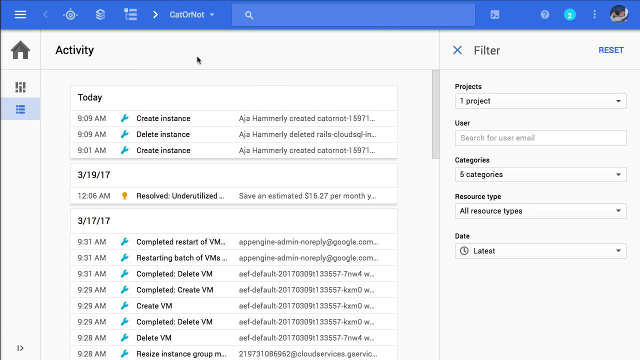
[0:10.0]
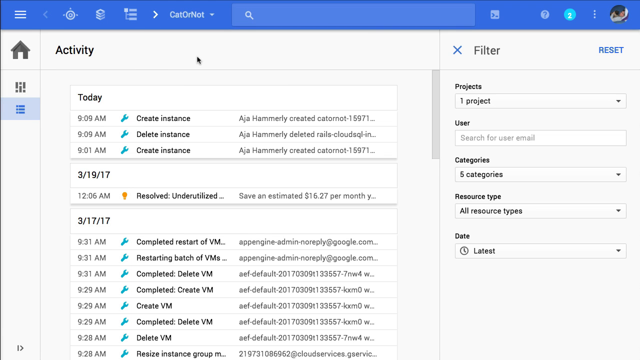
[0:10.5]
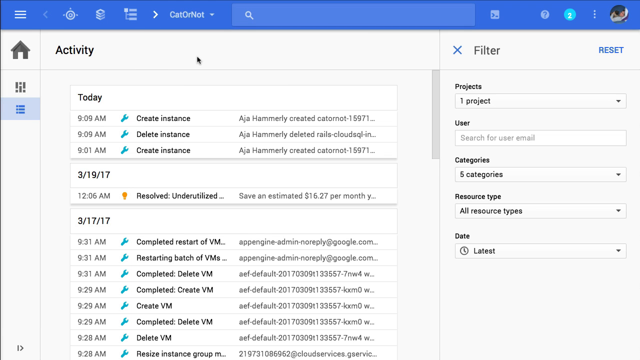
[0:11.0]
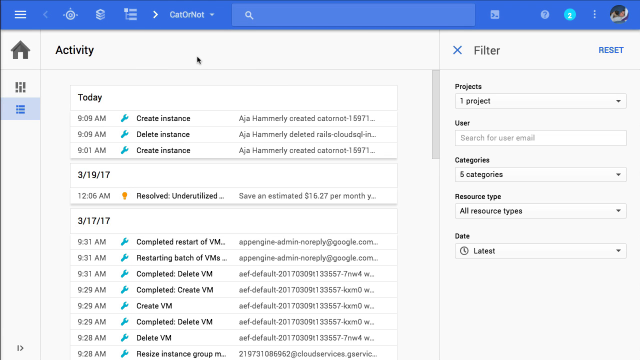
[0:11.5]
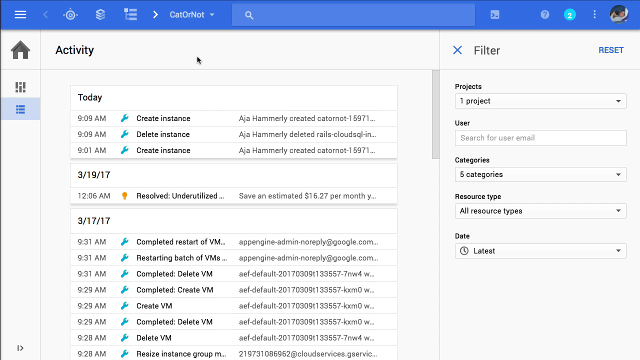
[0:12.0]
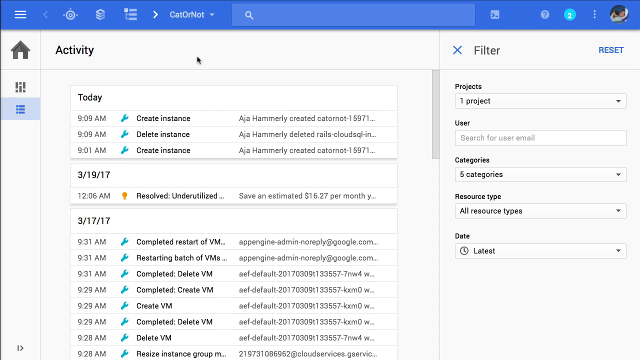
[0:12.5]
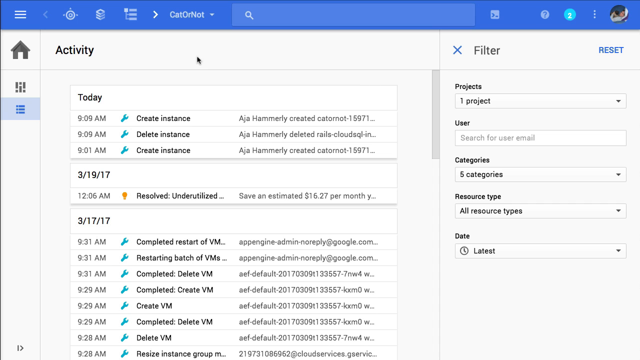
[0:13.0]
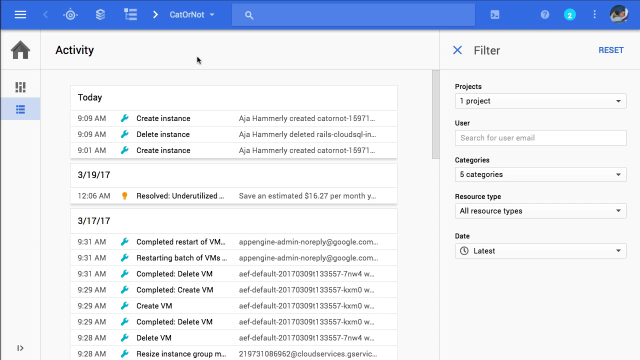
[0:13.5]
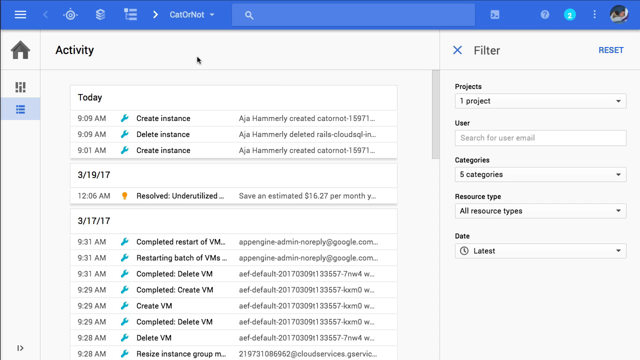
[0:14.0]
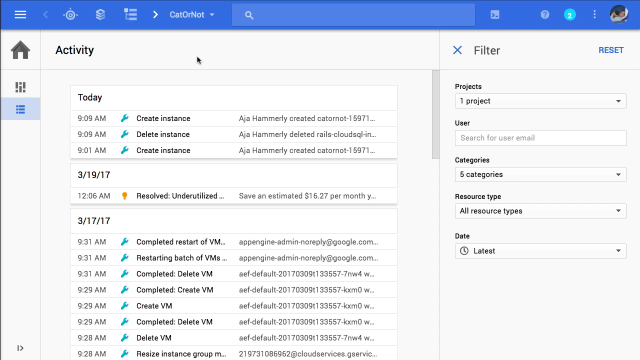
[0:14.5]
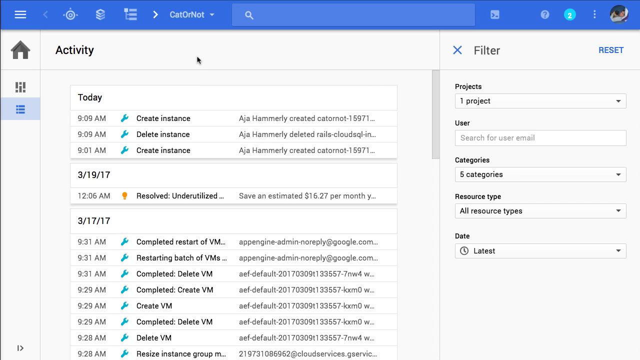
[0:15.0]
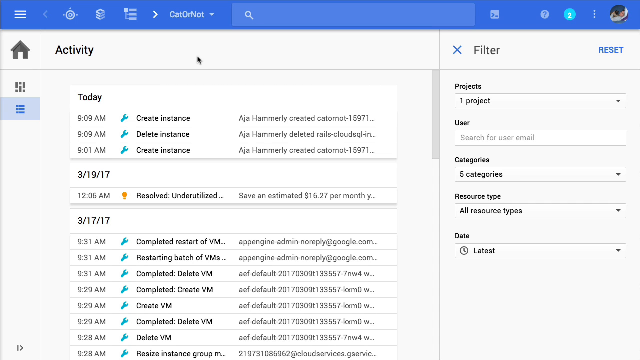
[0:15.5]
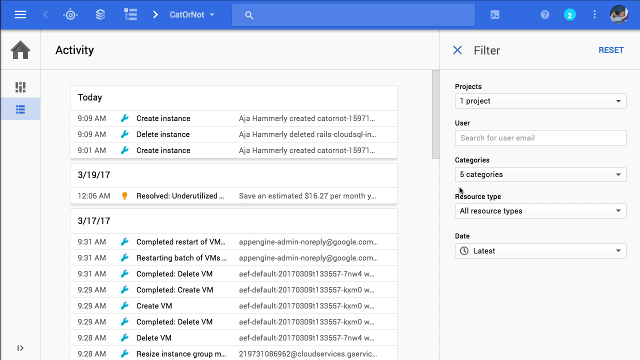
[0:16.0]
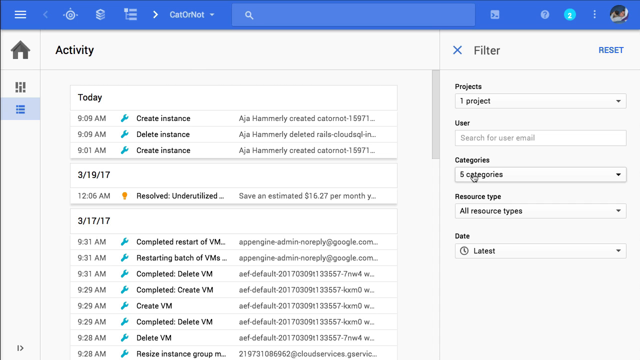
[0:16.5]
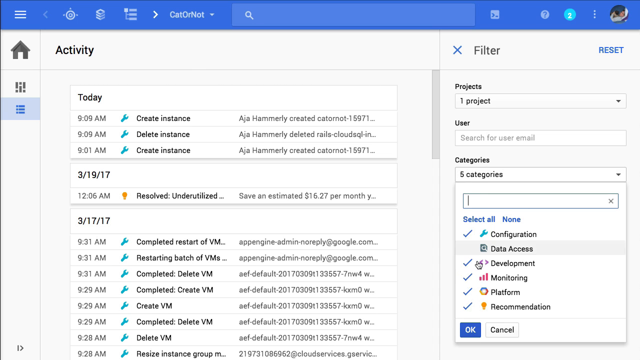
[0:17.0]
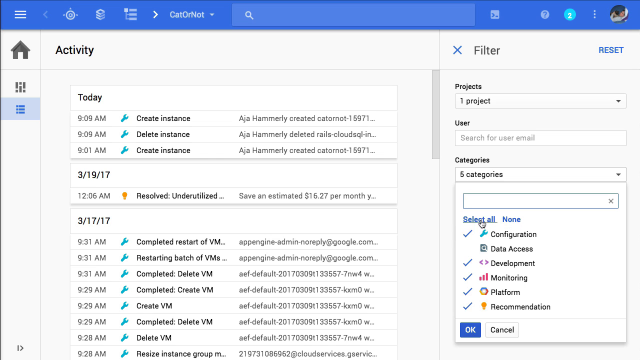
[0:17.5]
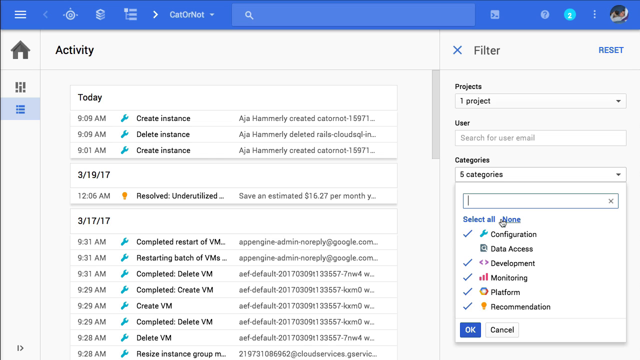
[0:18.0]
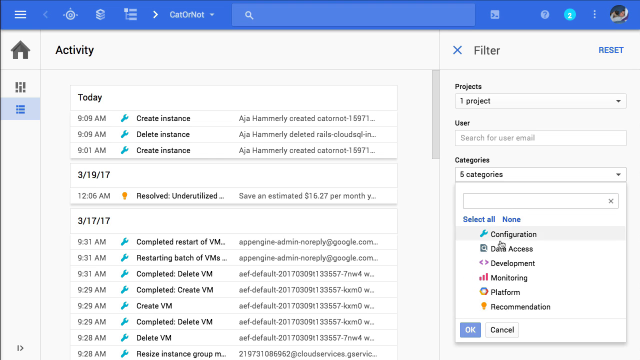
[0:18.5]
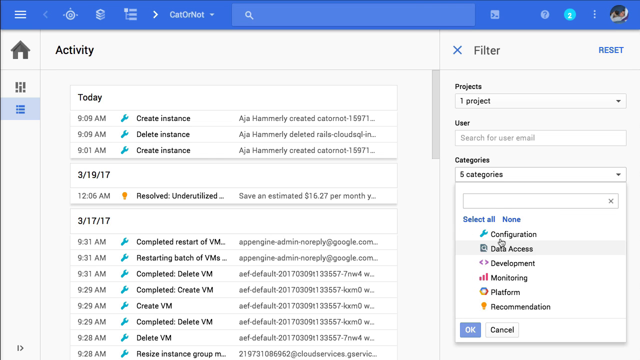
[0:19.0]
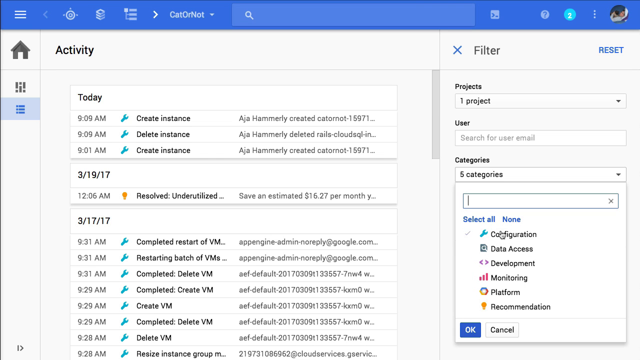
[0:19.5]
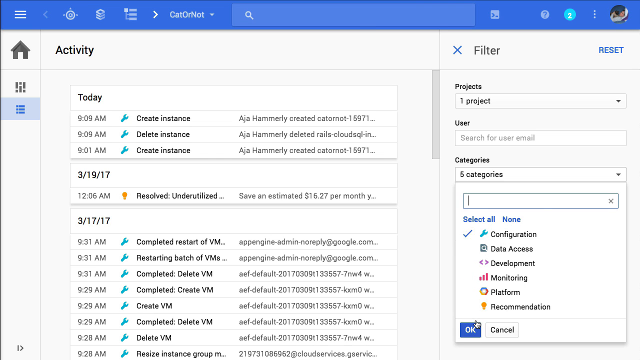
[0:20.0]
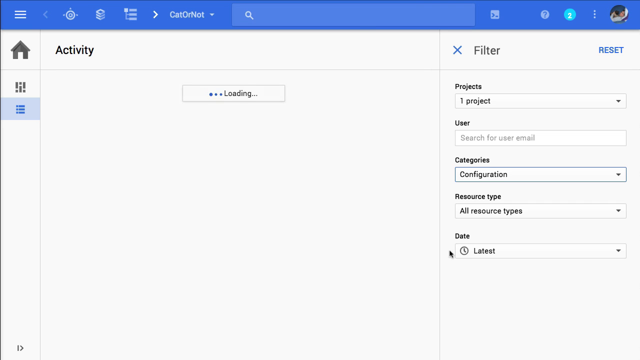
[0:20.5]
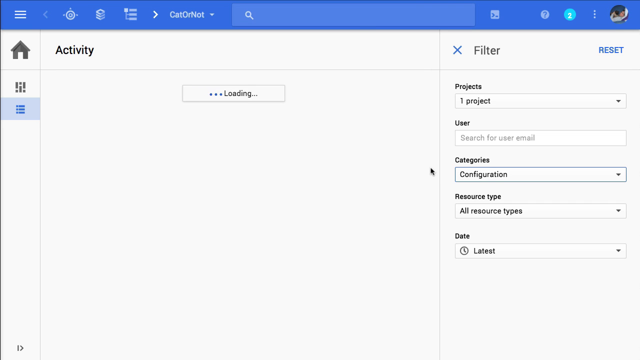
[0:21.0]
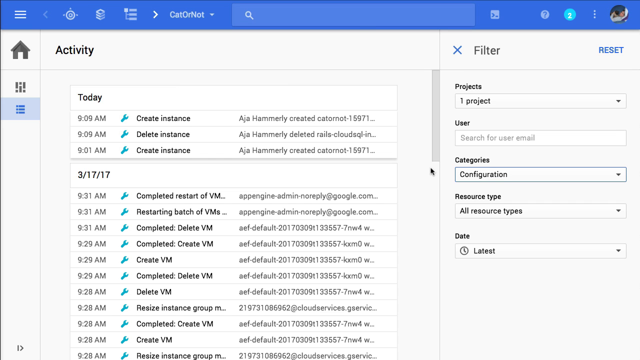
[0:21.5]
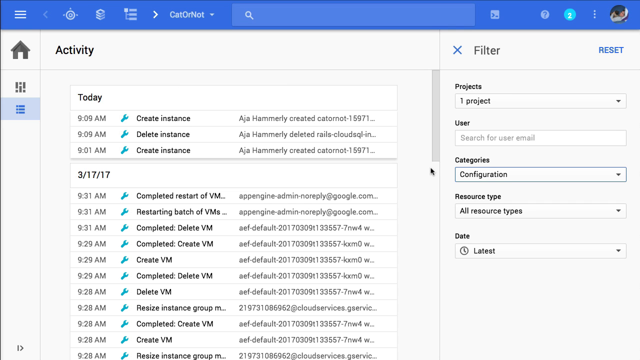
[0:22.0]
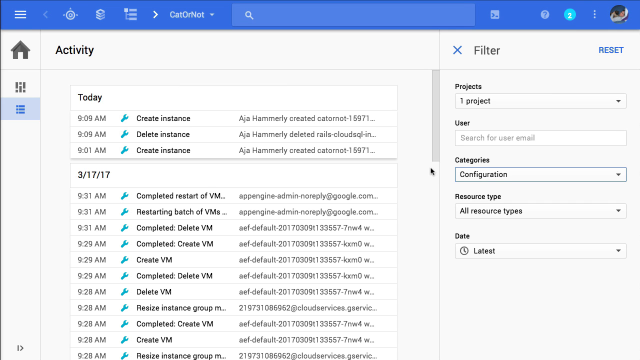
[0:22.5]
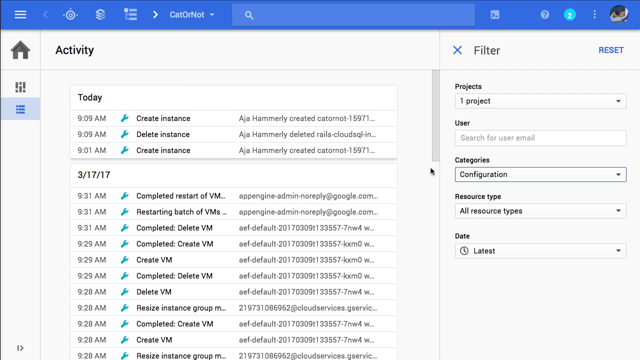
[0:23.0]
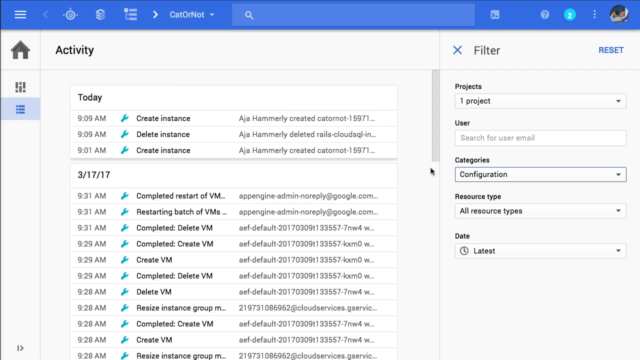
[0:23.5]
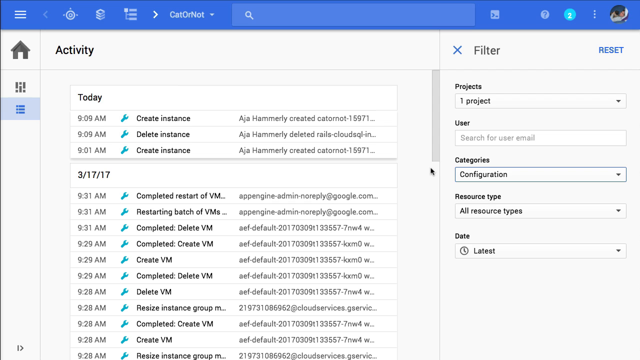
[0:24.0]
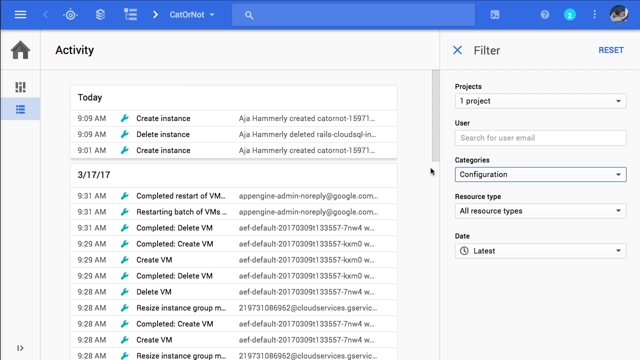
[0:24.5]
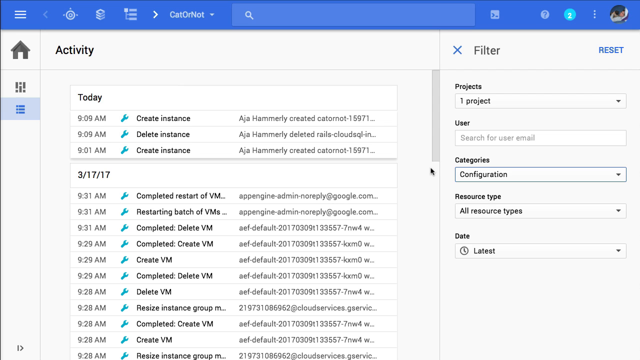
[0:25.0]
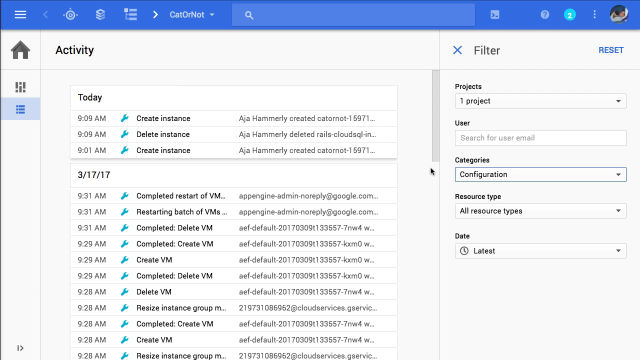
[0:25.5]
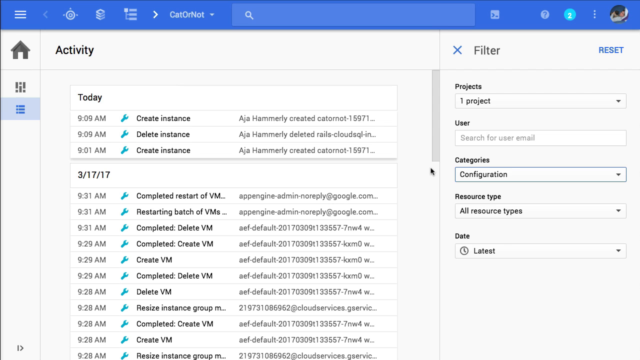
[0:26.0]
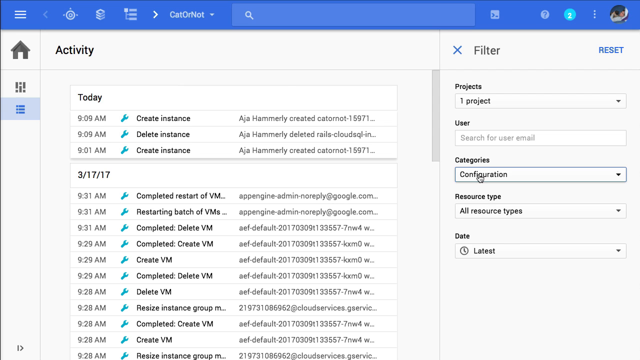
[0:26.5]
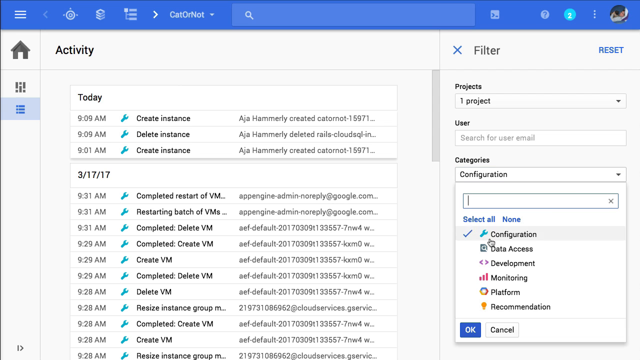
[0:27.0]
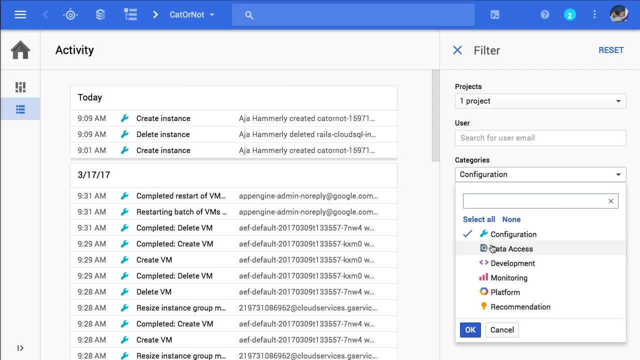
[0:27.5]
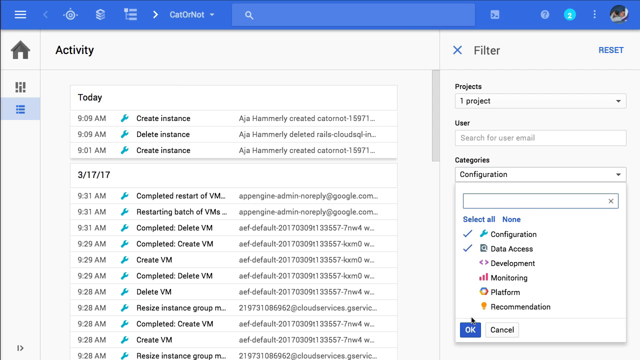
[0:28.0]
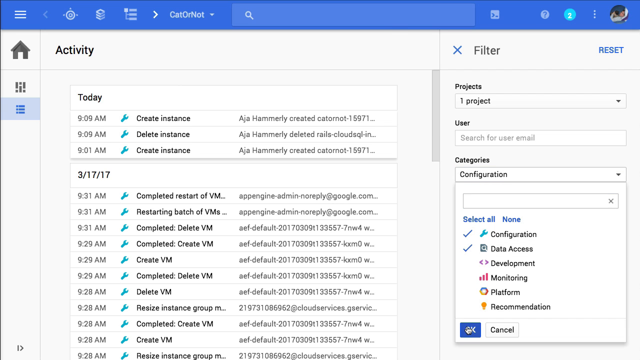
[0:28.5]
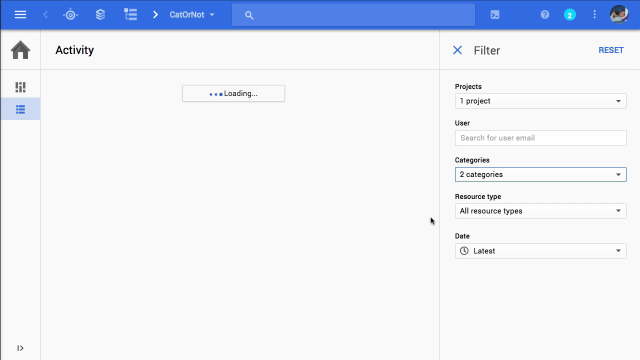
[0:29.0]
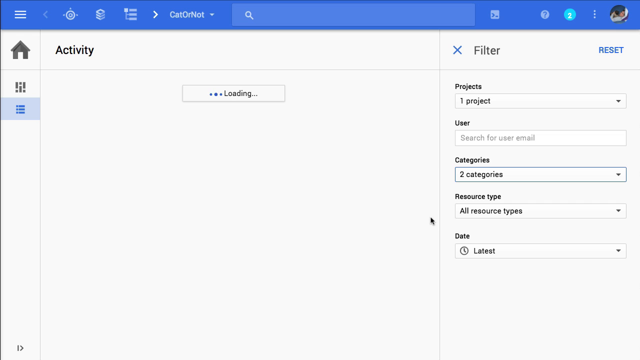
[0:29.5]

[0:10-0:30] The activity page of the platform is shown, listing activities by date. There are options to edit a user and to filter, with options for categories, resource type and date, and a project option at the top of the page under the activity category.